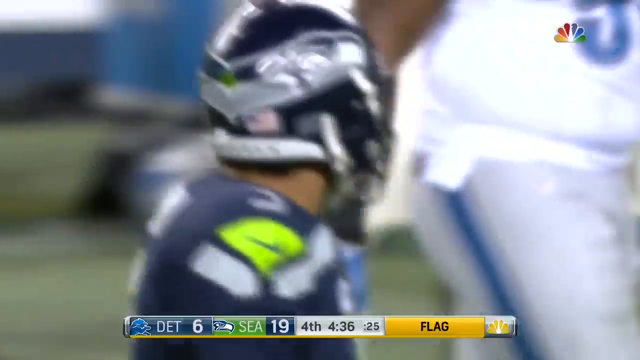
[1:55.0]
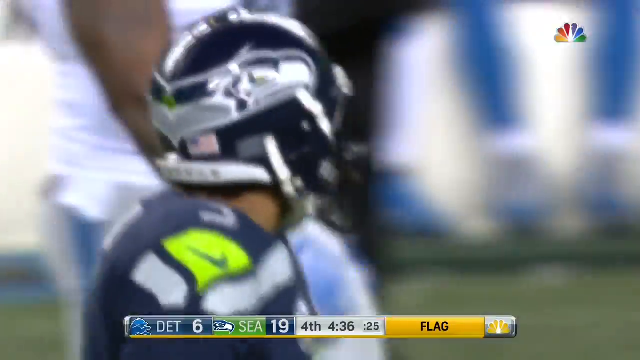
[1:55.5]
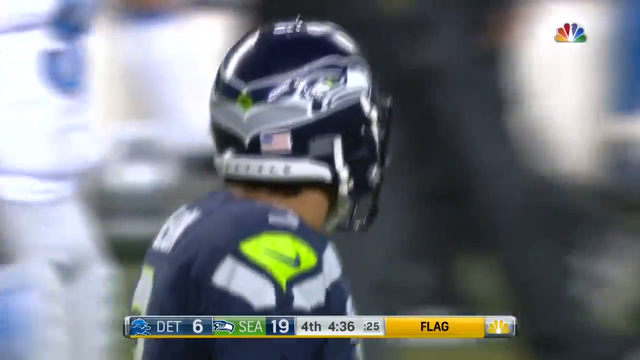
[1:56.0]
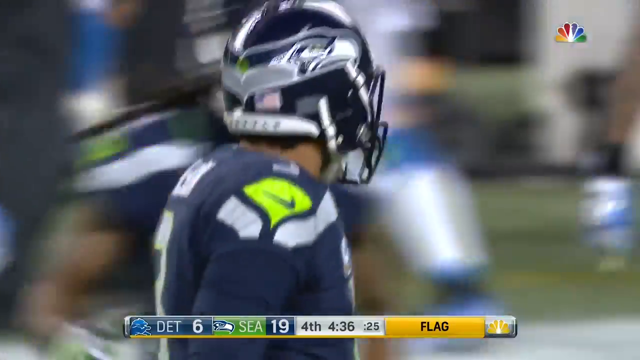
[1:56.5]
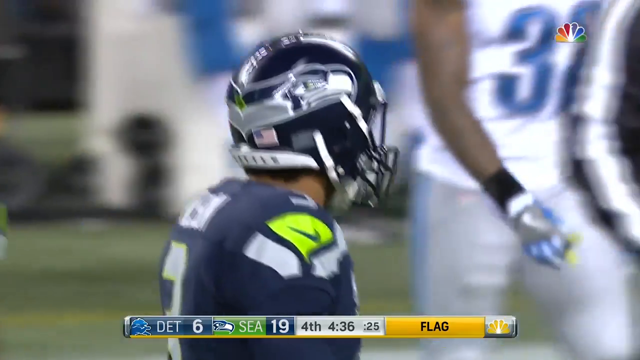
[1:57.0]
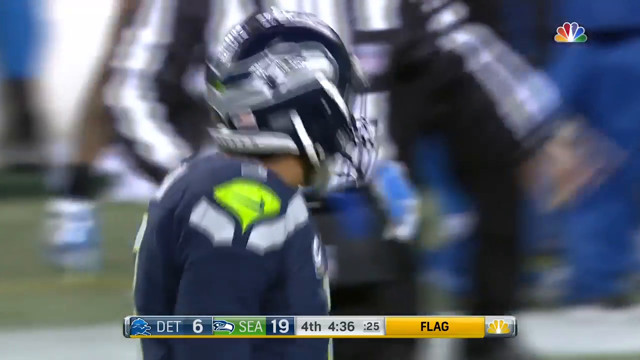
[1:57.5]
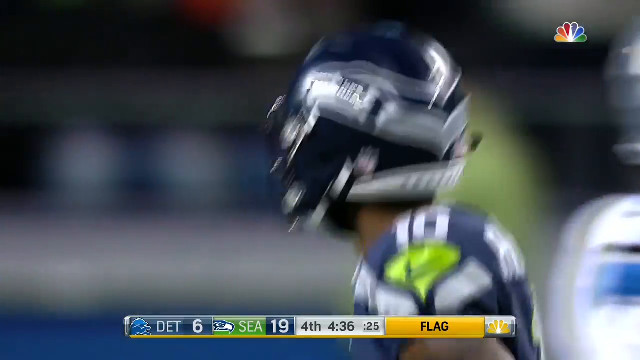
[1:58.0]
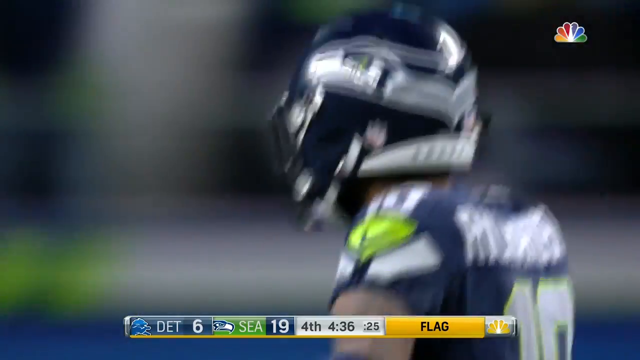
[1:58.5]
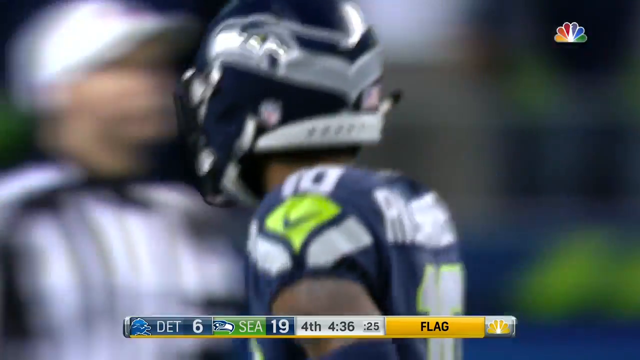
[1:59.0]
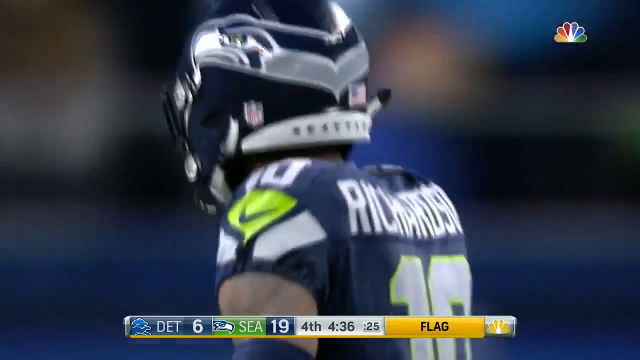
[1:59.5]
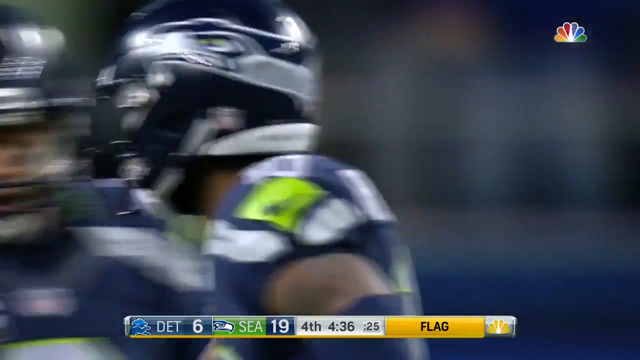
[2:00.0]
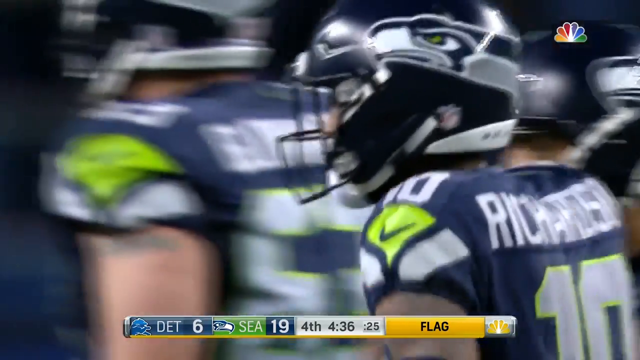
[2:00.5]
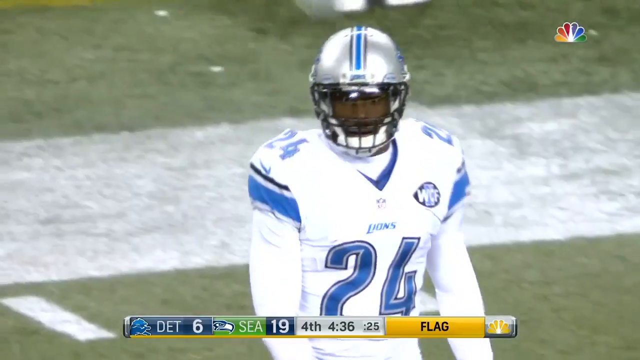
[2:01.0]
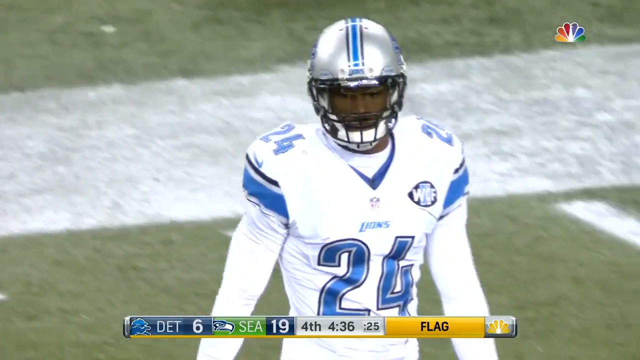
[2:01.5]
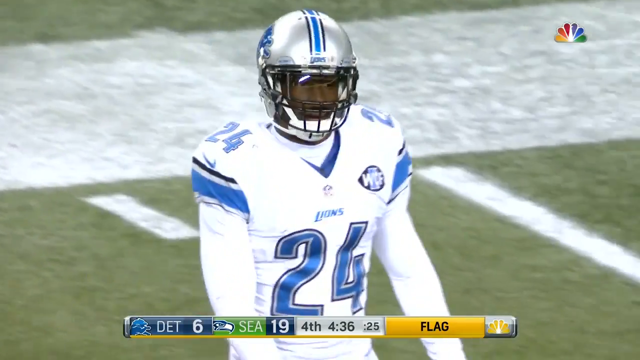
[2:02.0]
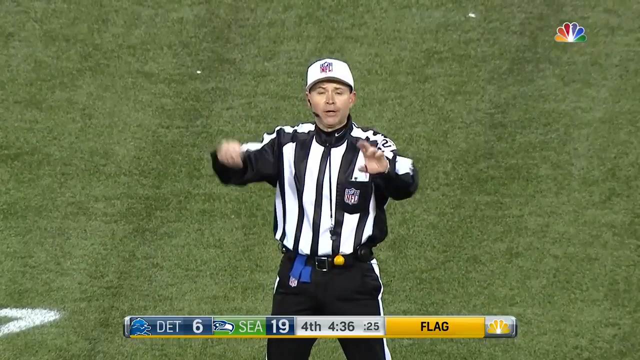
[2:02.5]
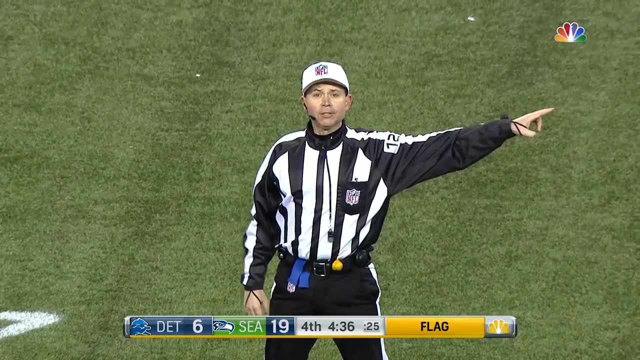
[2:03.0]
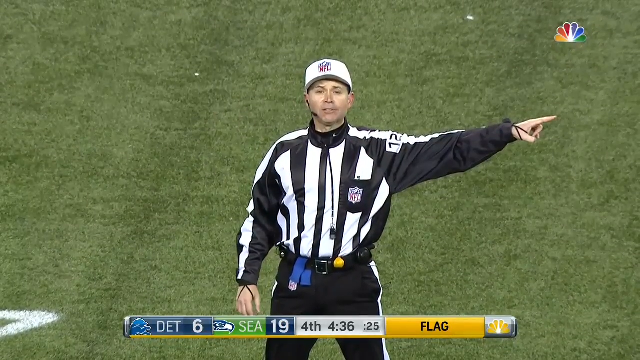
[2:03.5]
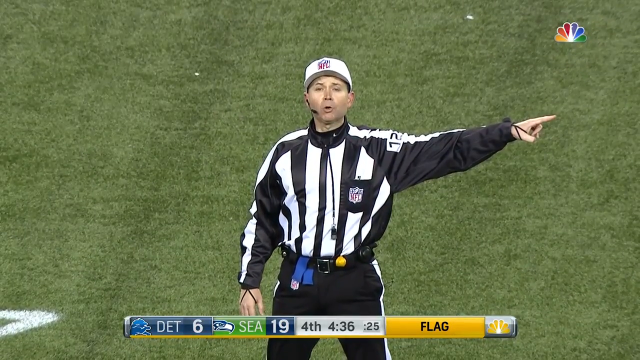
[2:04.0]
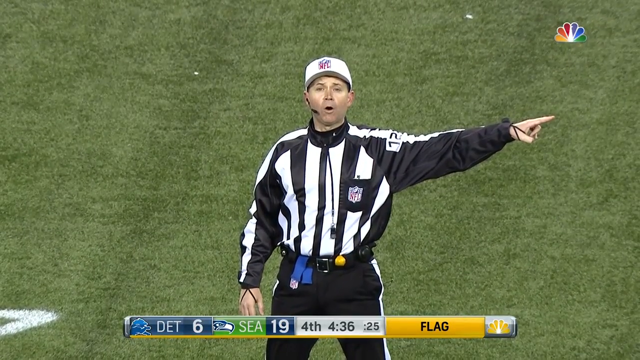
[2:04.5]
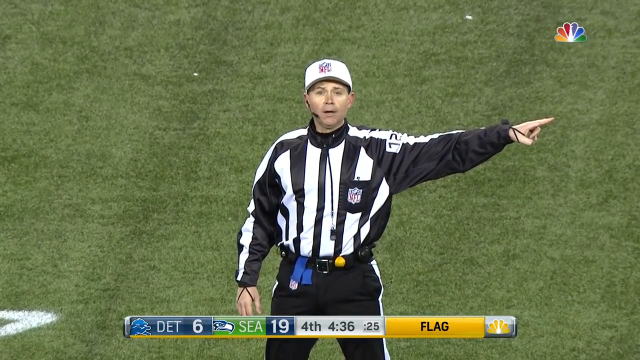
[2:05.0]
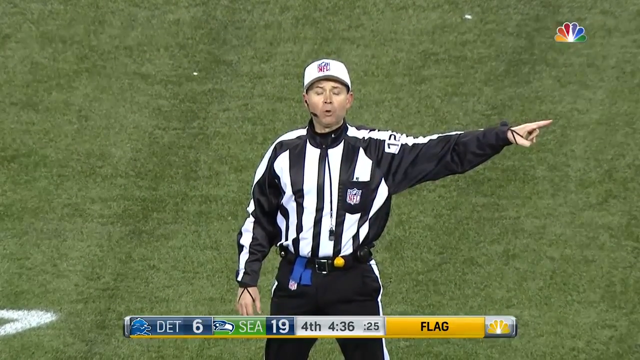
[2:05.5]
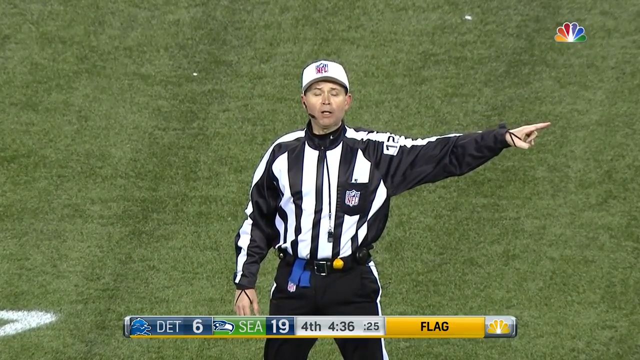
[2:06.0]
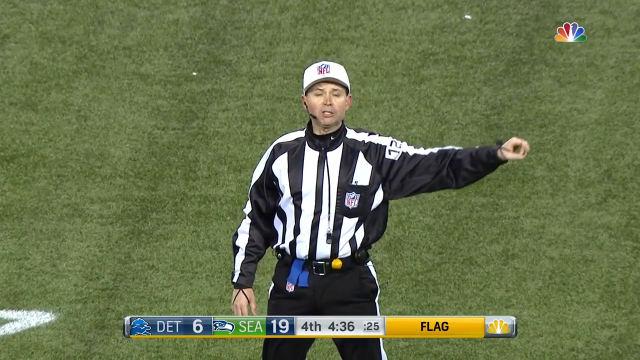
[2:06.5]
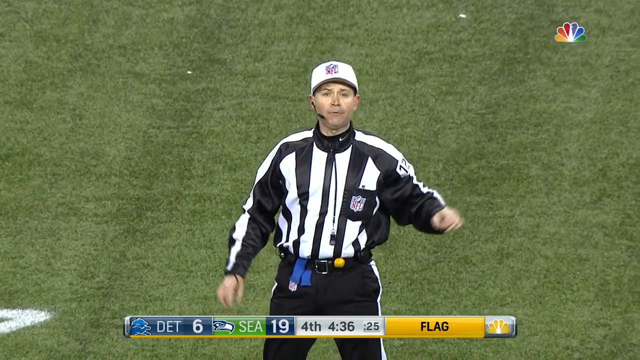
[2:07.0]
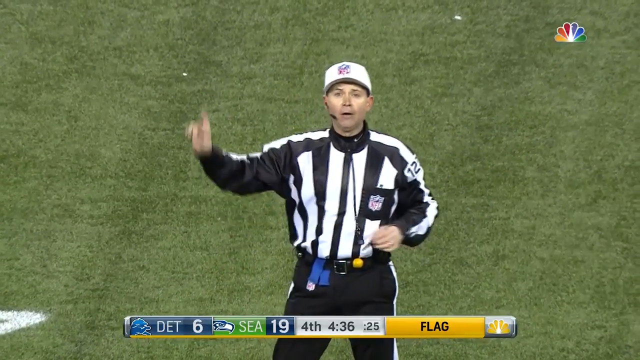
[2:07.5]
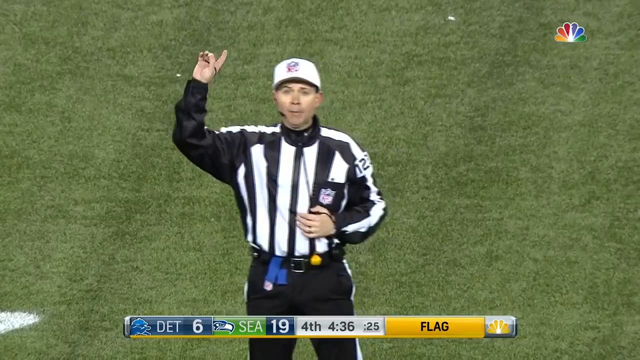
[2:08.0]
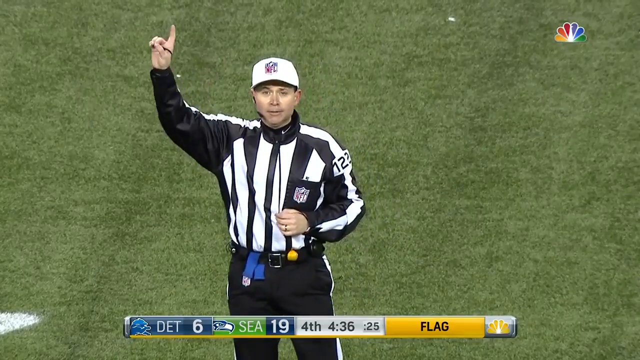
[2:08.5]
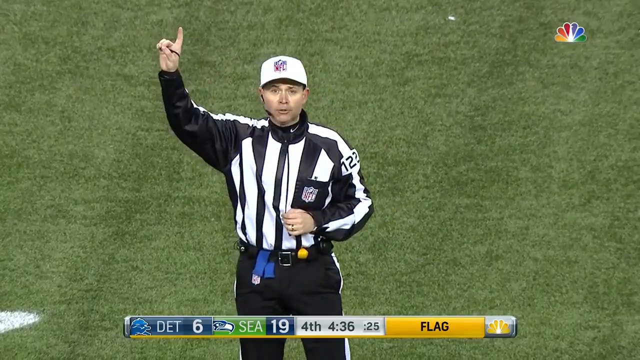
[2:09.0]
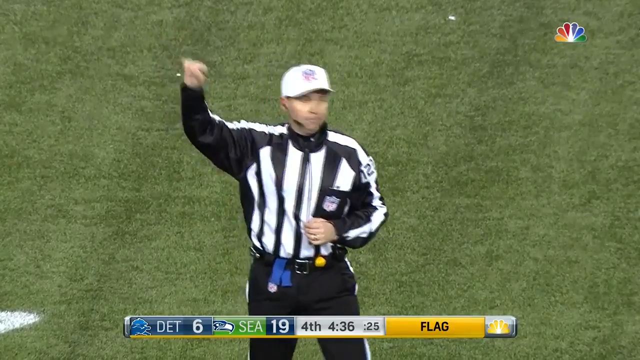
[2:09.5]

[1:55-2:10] A zoomed-in side view shows Seahawks quarterback Russell Wilson walking down the field with various other players in the background. A zoomed-in shot then shows Richardson, number 10, walking down the field past a referee and a few of his teammates. Lions number 24 is seen from the front, walking slowly and looking disappointed. A referee in the middle of the field, wearing a black and white striped shirt, black pants, and a white hat, points to the right to indicate a flag on the play and begins talking, then raises his right index finger to signal a first down.